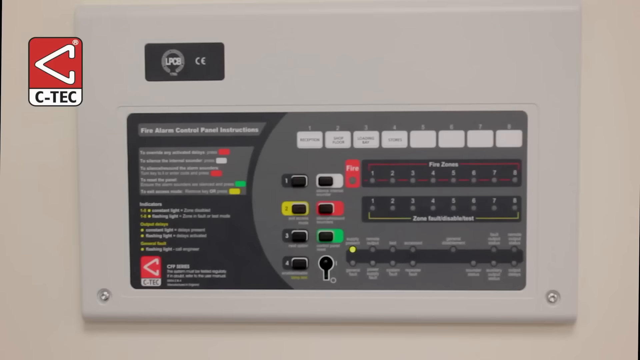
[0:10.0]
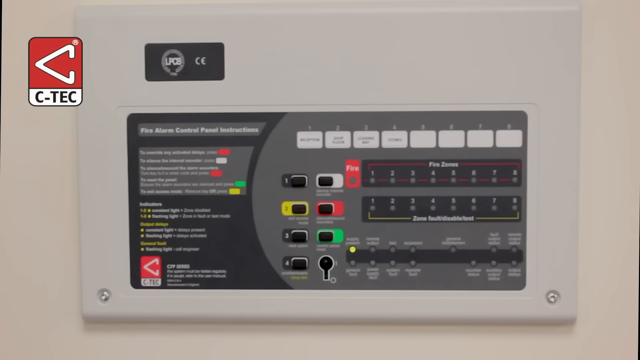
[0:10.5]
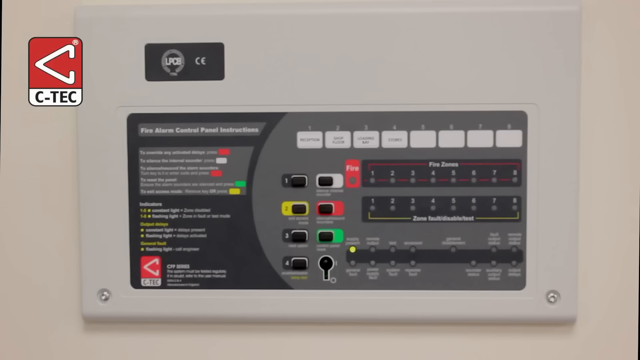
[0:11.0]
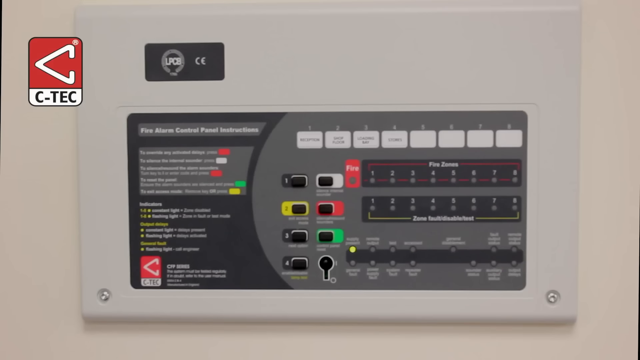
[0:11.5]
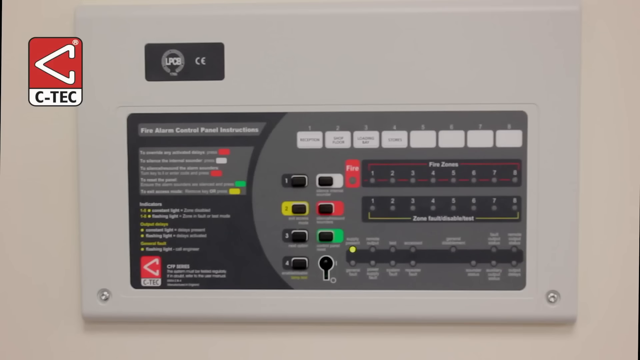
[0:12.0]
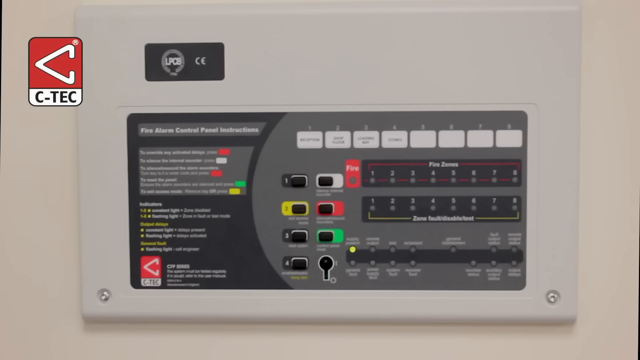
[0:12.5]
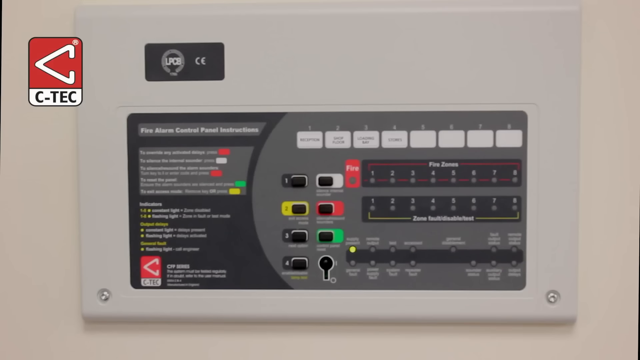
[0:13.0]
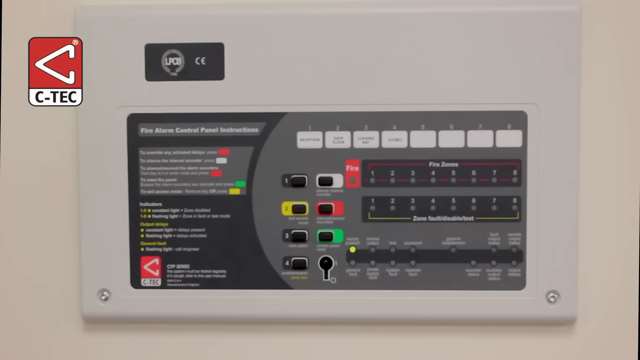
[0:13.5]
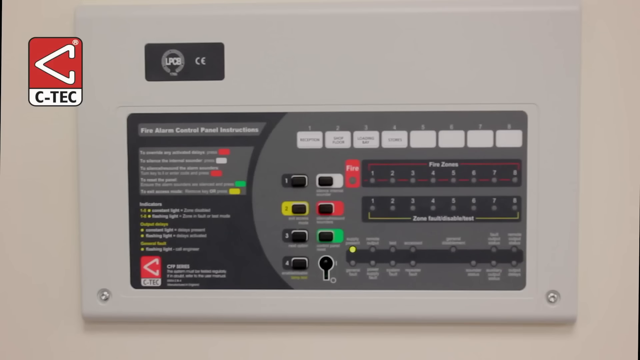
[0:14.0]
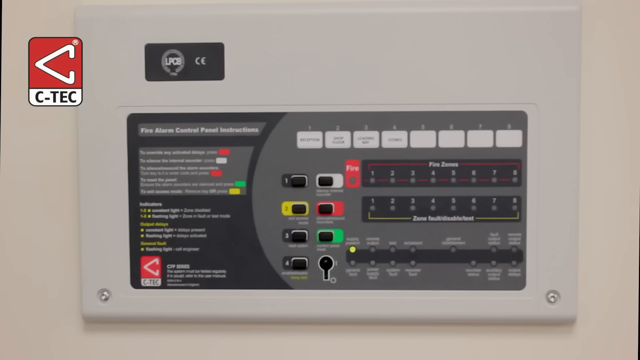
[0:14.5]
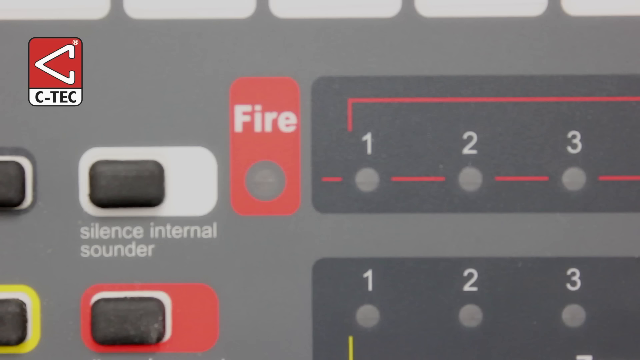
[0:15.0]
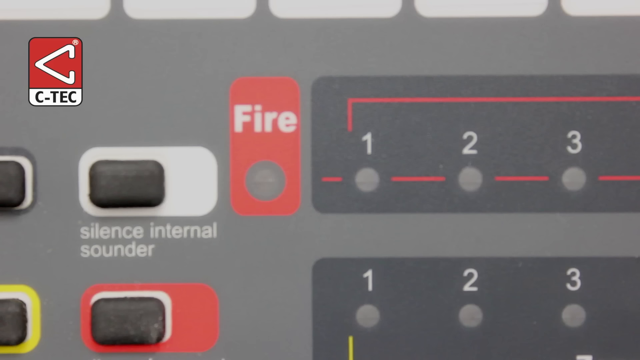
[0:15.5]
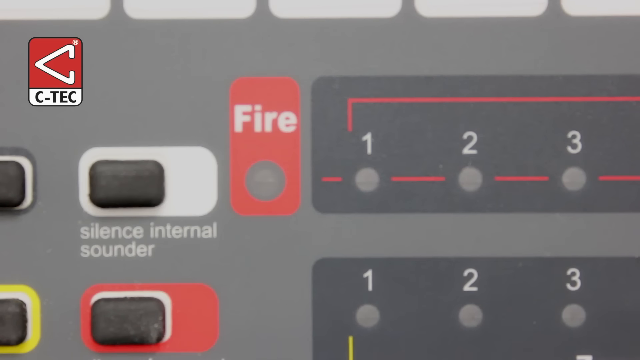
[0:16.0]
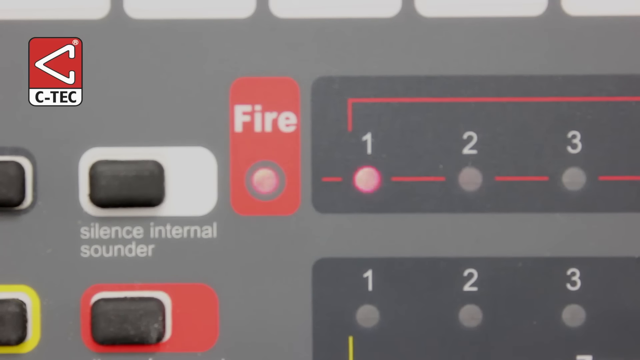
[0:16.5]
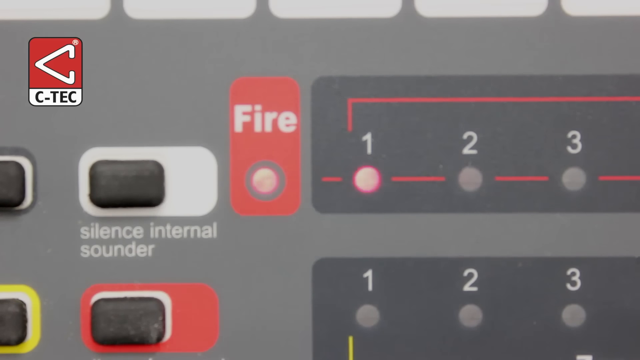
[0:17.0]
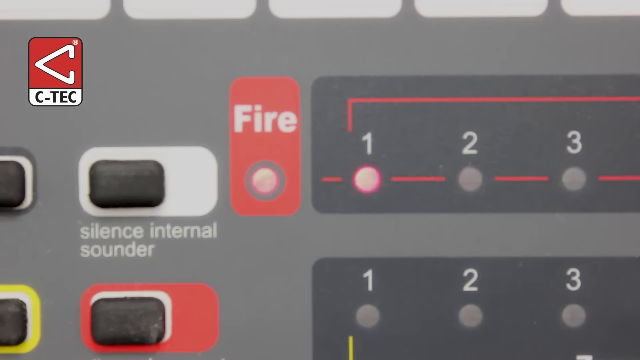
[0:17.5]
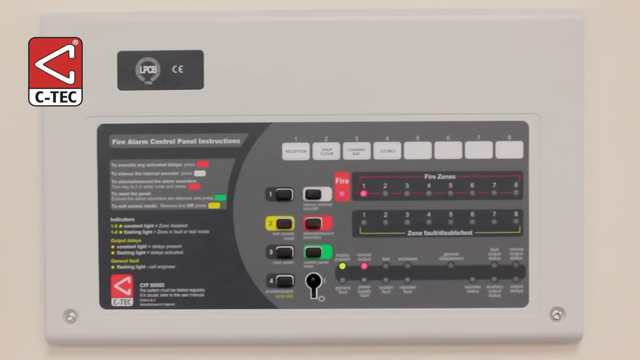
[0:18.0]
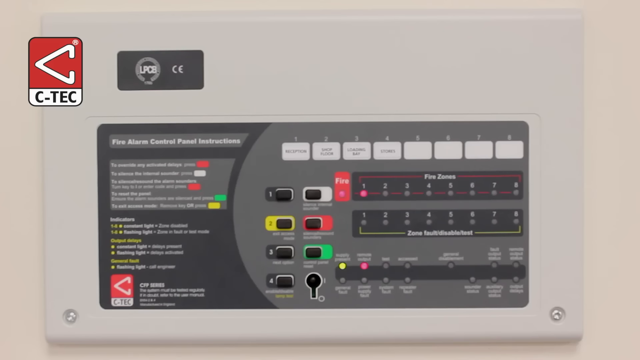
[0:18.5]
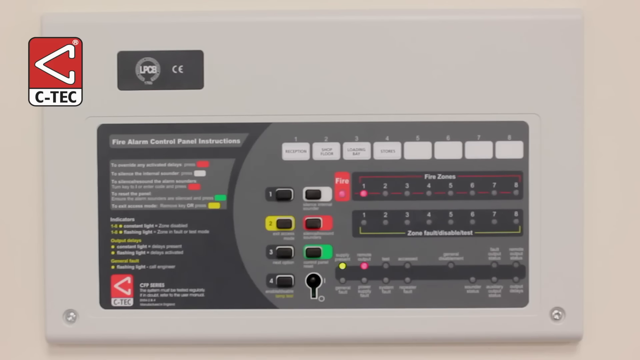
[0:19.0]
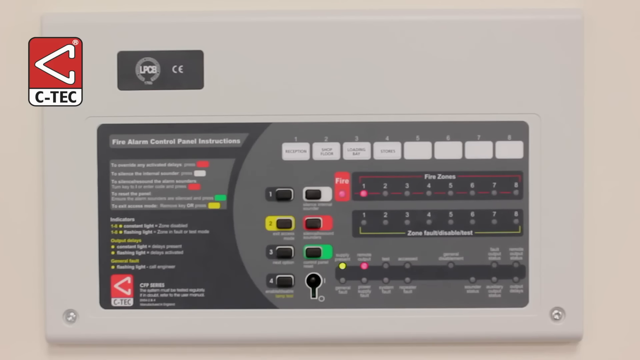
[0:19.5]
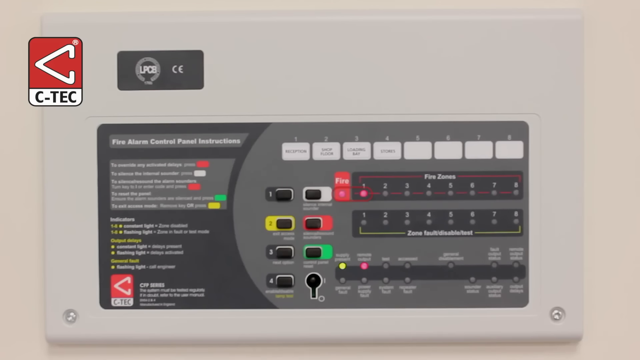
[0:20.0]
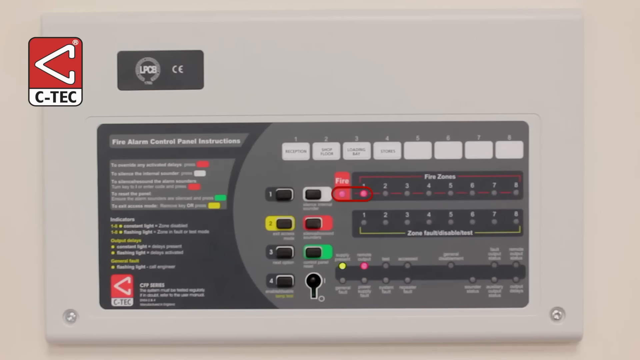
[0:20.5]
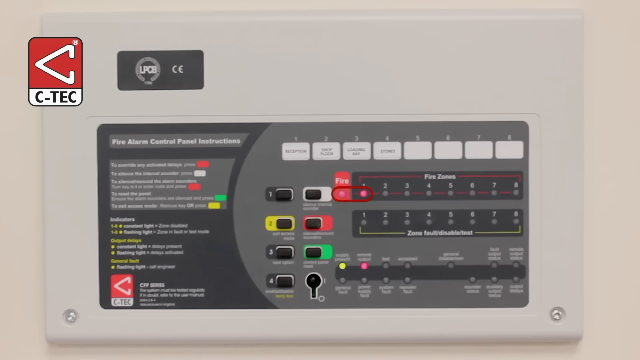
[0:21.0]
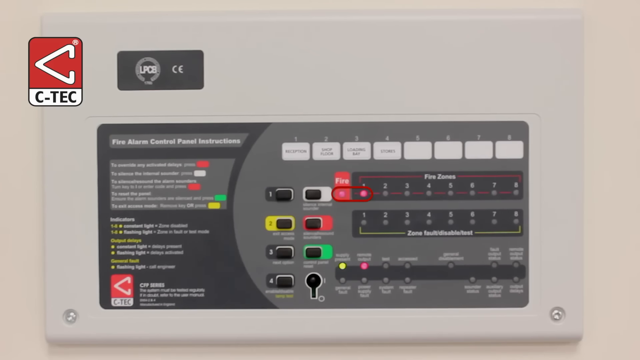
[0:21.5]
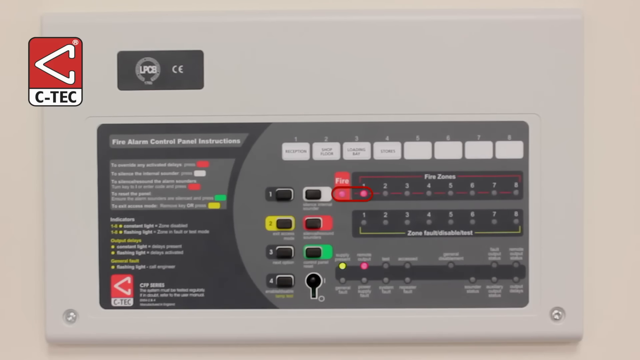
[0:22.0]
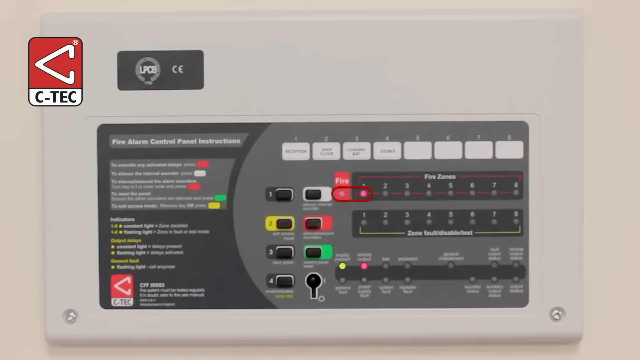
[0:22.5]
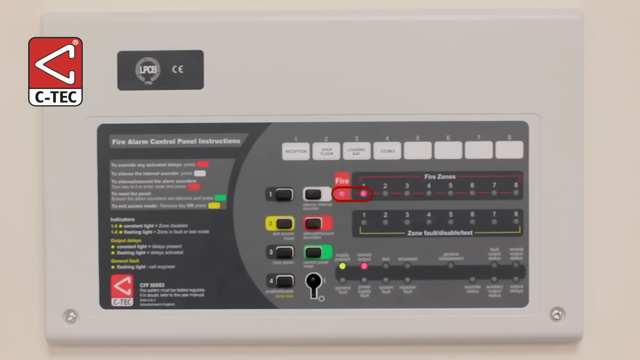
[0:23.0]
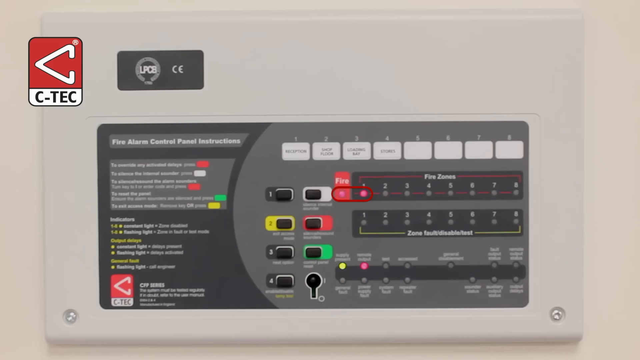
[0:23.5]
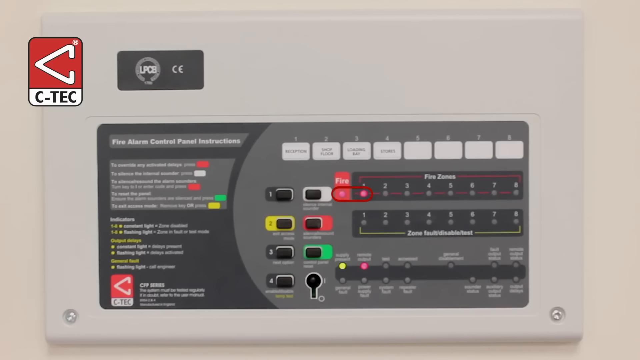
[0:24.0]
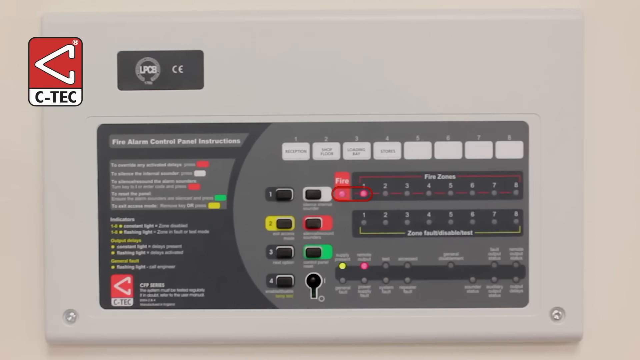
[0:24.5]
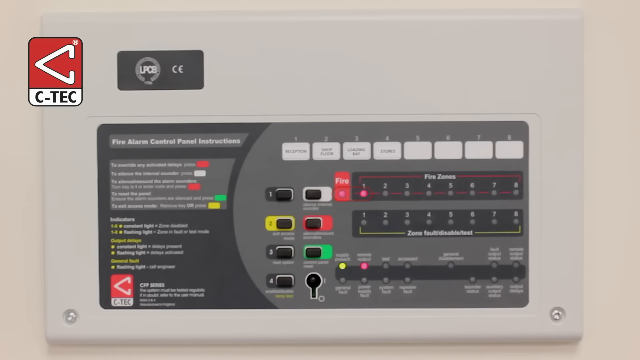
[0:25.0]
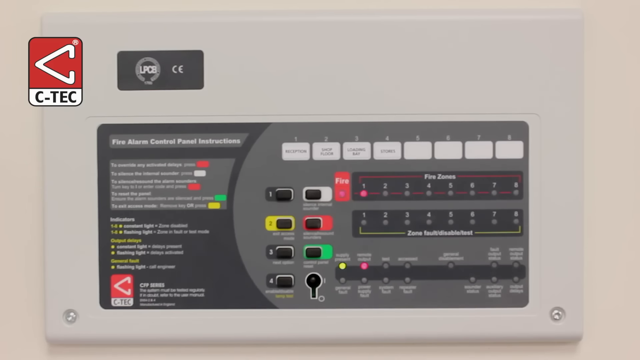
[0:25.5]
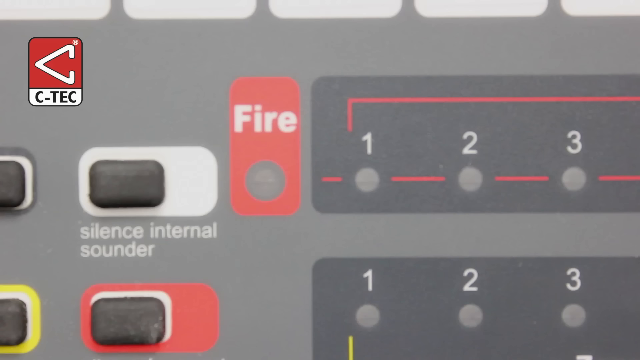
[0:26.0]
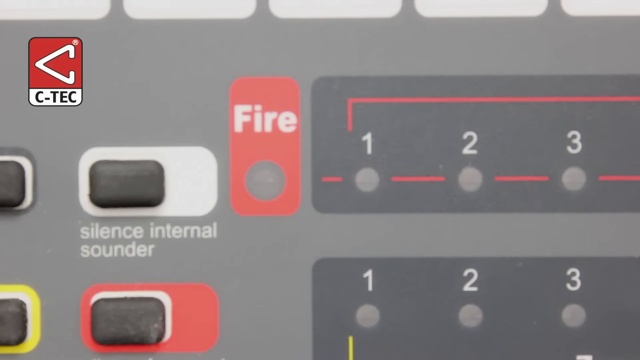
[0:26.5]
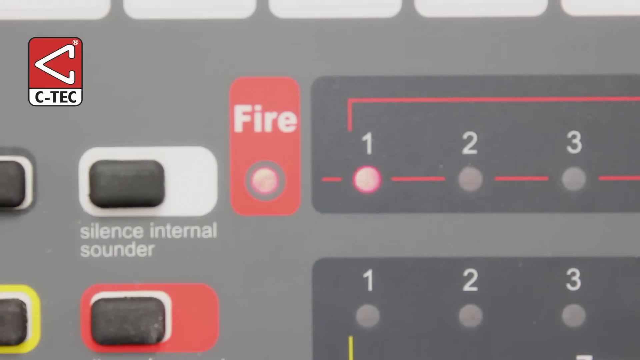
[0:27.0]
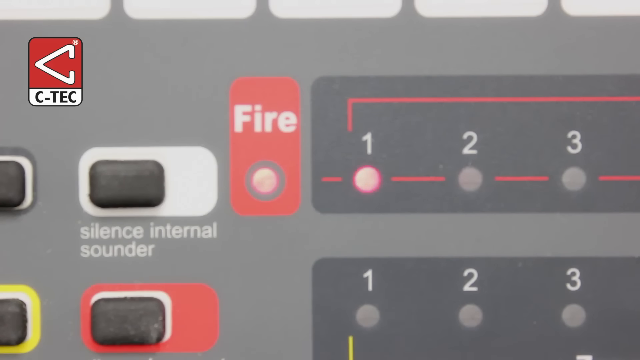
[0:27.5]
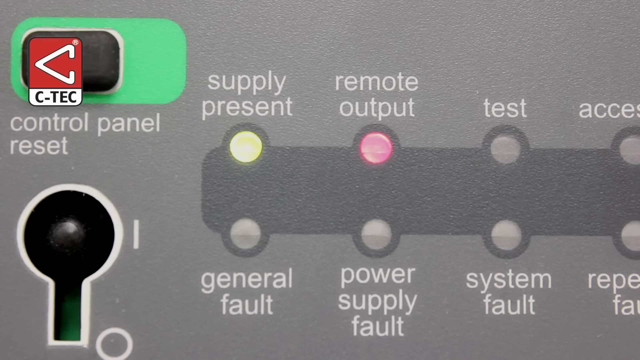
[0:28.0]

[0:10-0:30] The fire alarm control panel instructions are shown, and on the right-hand side there are eight small grey rectangular boxes, the first four of which have black text in them. Below to the right there is a red border and a title that says "fire zones", with eight numbers below, each with a small light; none of the lights are lit. Below that is another panel that says "zone fault" with a yellow outline, again with eight lights, all unlit. There are more lights at the bottom right: eight on one side, one in the middle and five on the right-hand side, and only the top left one on the left-hand side is lit, with a green light. Instructions on the left-hand side each have a colour next to them, red, grey, green or yellow, which correlate to the colours on the right-hand side of the panel. The video then zooms in to where it says "fire", as though a fire alarm were being sounded; the fire section has a red light below it that is flashing, as does the number one, indicating that the fire is in zone one.